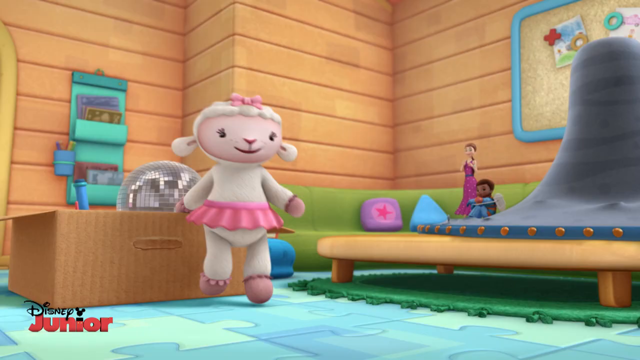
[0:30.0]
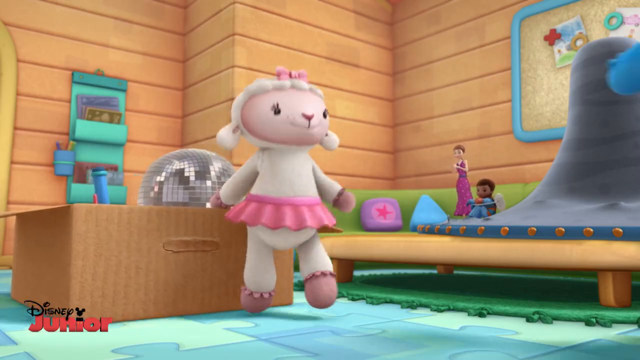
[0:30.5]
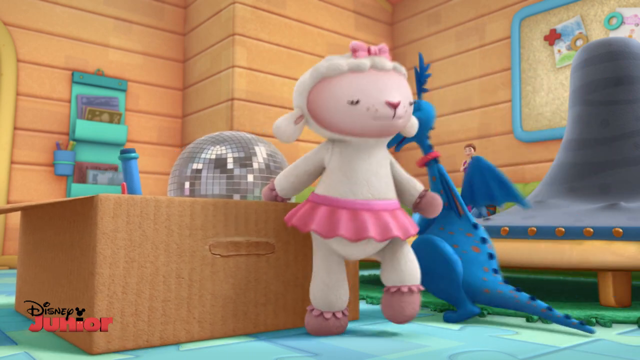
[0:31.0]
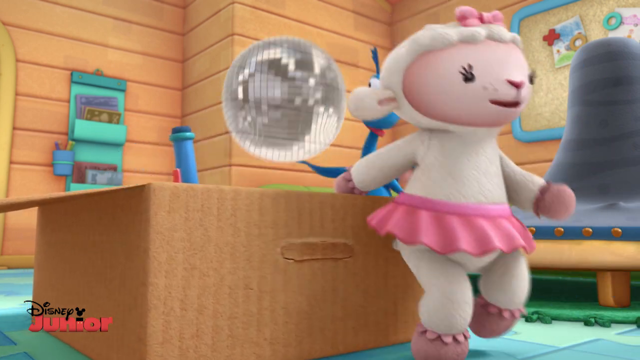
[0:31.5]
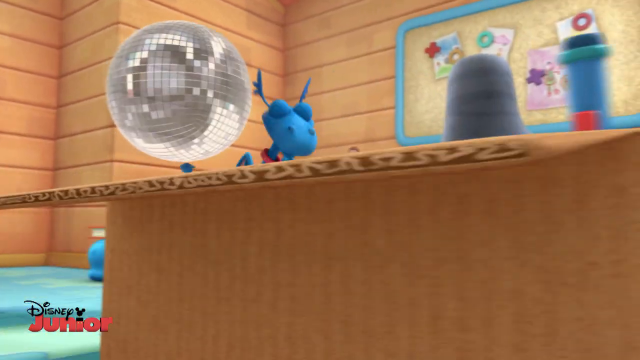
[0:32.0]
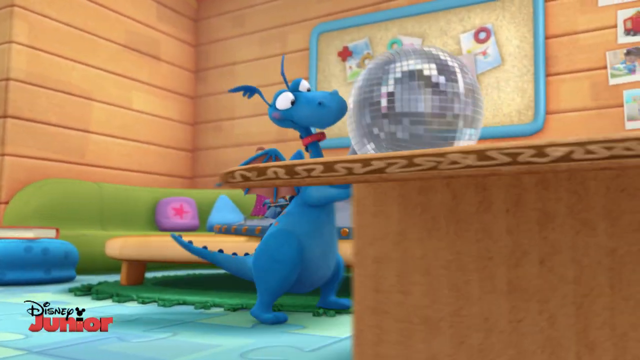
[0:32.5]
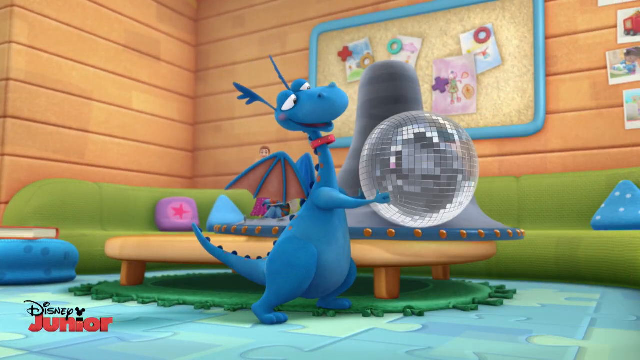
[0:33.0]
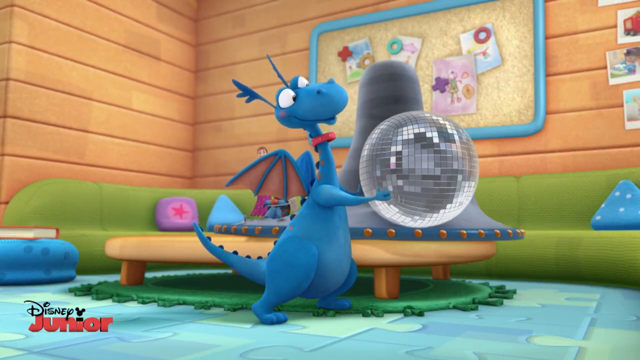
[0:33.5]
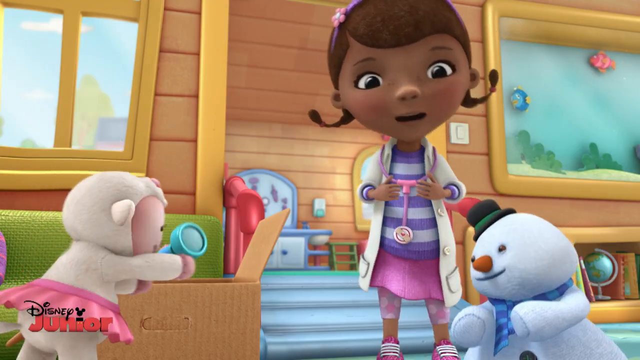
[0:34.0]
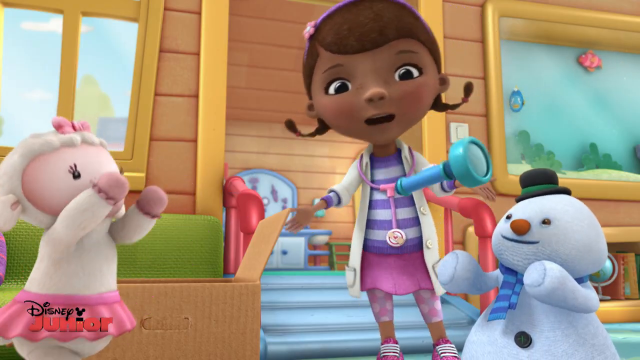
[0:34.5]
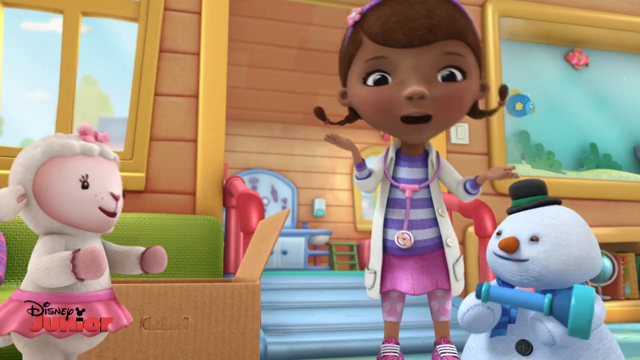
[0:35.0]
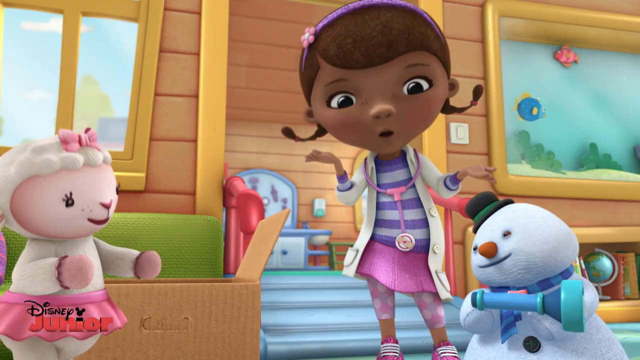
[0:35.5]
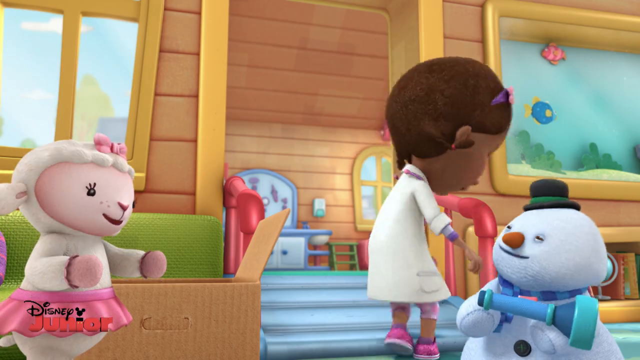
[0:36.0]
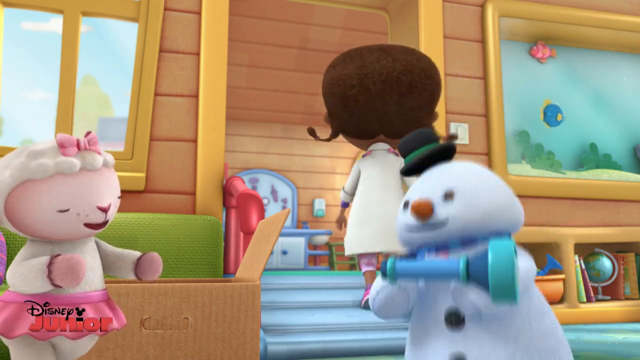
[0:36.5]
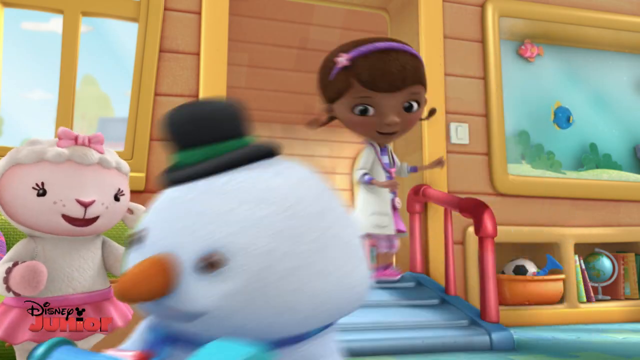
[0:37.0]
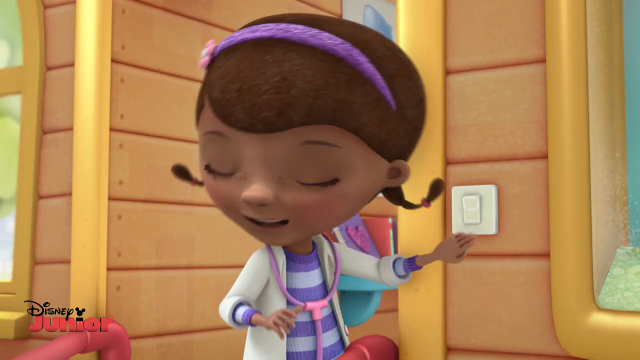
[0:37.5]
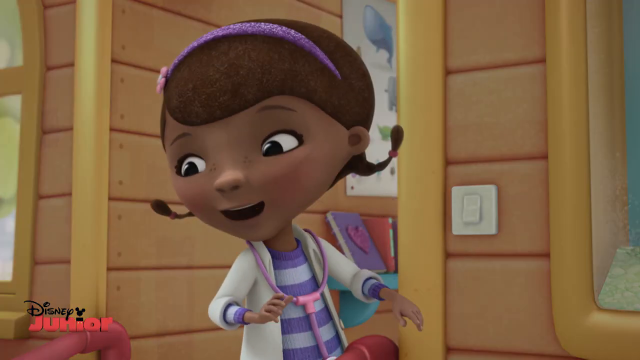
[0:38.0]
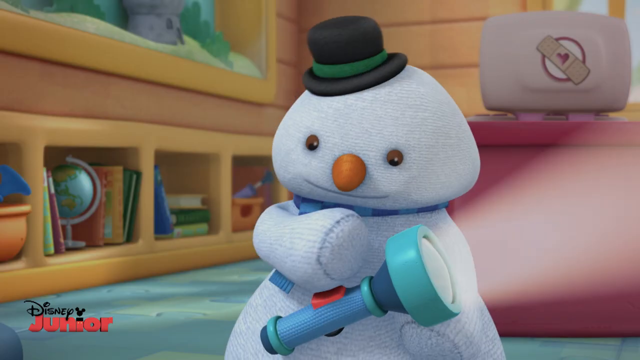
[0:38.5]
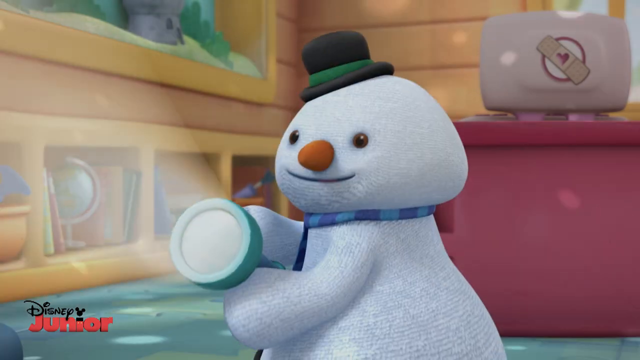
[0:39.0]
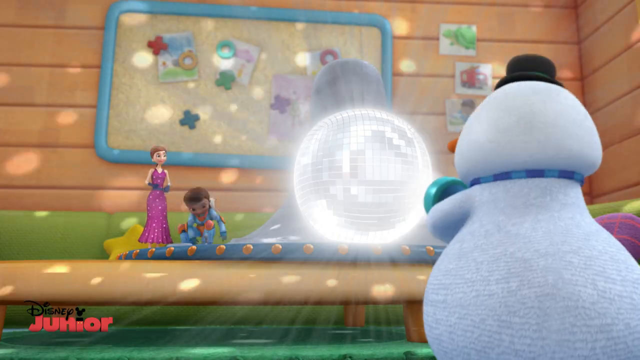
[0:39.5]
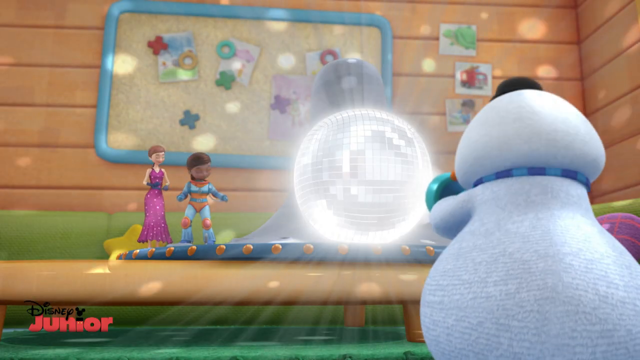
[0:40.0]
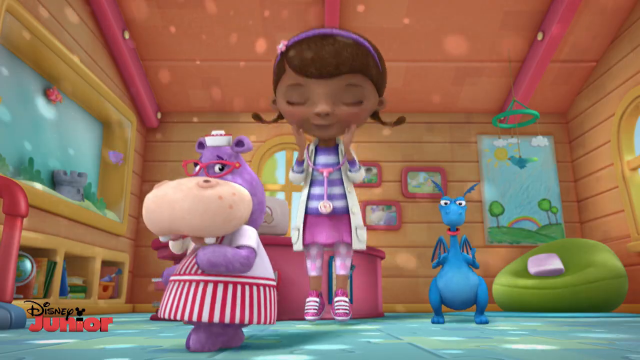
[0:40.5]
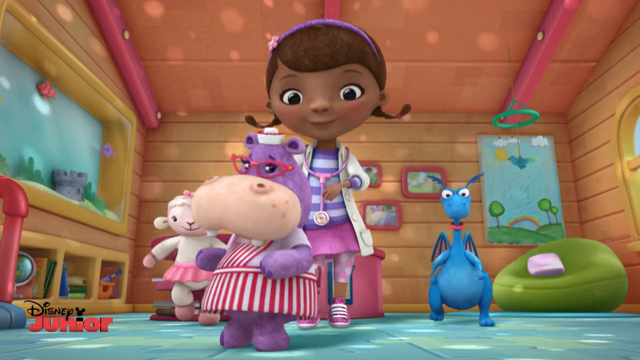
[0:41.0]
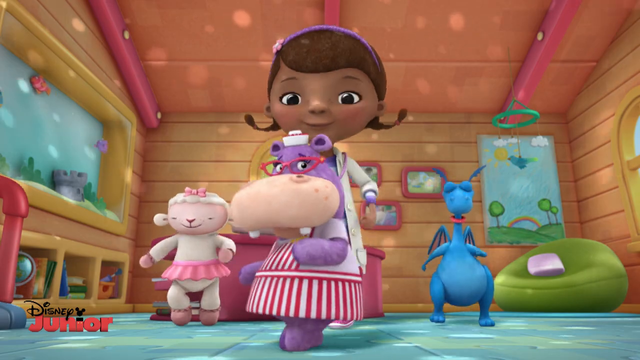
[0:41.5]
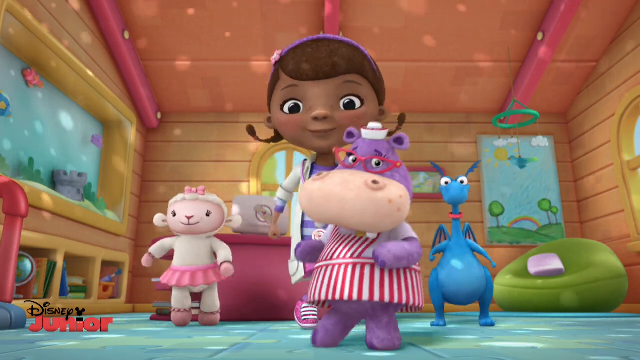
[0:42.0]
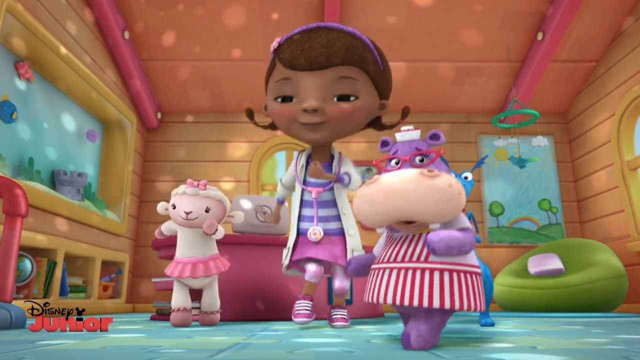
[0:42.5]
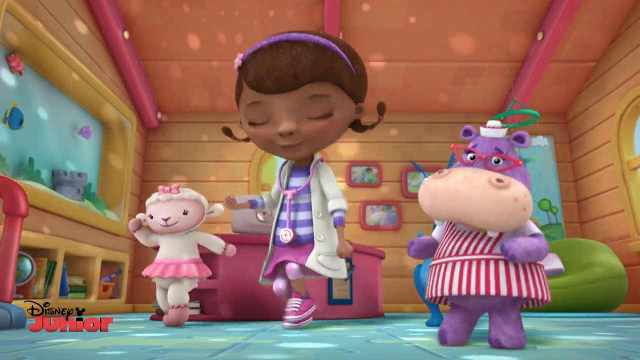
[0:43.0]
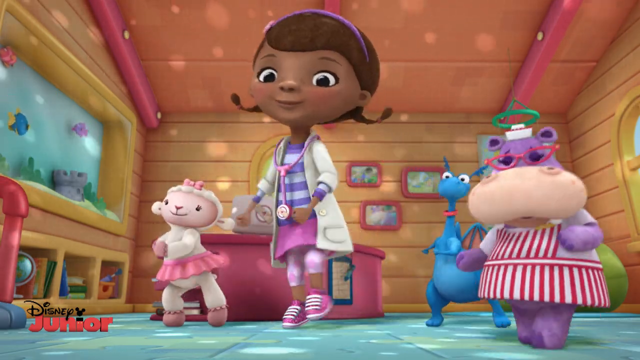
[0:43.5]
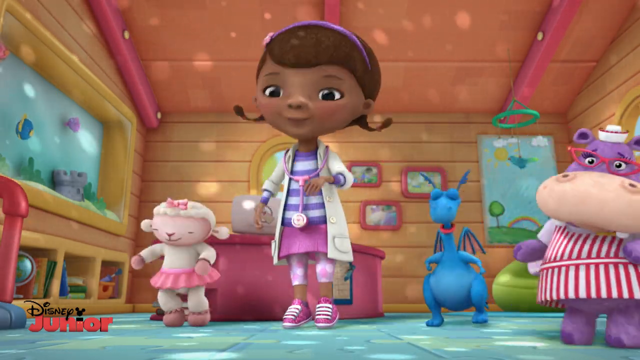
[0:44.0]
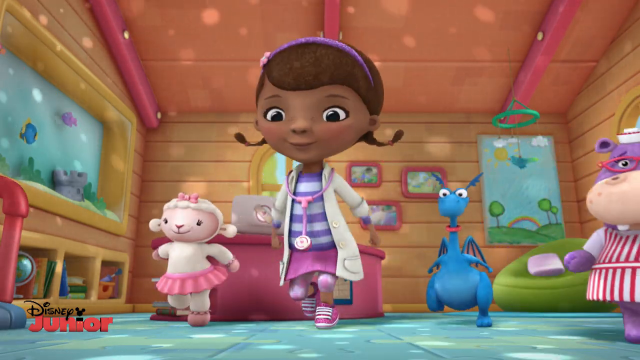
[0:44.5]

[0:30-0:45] The sheep drags a cardboard box along in a very happy disposition. The box has a disco ball in it, and the dragon picks up the disco ball and looks at it for a moment. It picks up what looks to be a blue flashlight and tosses it out of the box to the little snowman. The big girl is dancing and happy, and after everything is set up, it looks like she is throwing a kind of disco party. She dances with the sheep and the dragon alongside her and the purple hippopotamus in front of her; the stuffed animals are like little stuffed animals come to life. The hippopotamus does a little moonwalk across the screen. The lights are turned off, and disco lights are in the background.